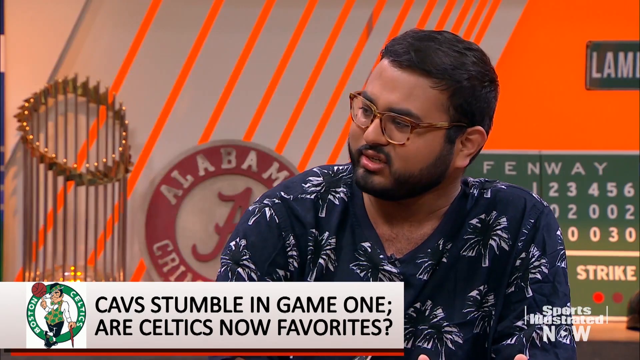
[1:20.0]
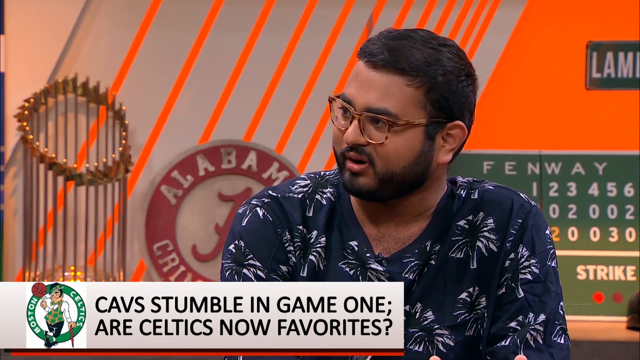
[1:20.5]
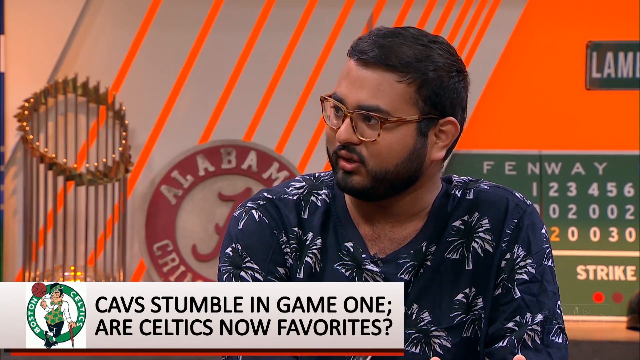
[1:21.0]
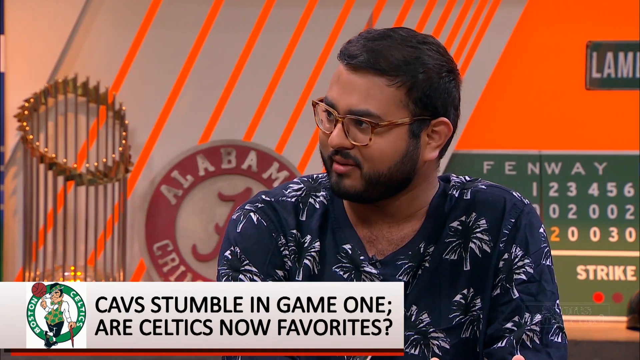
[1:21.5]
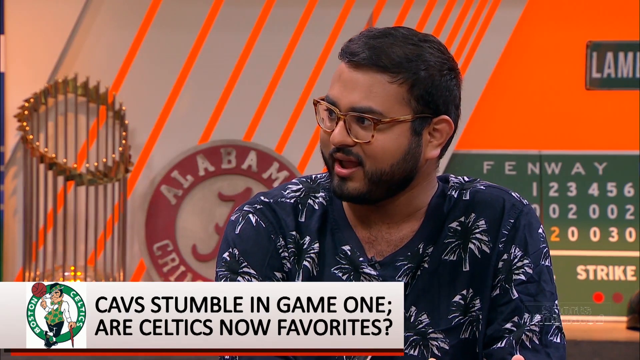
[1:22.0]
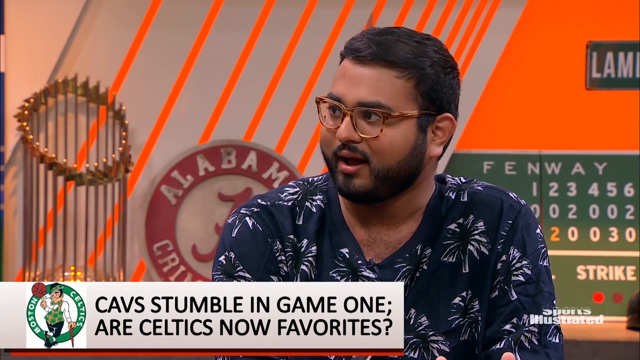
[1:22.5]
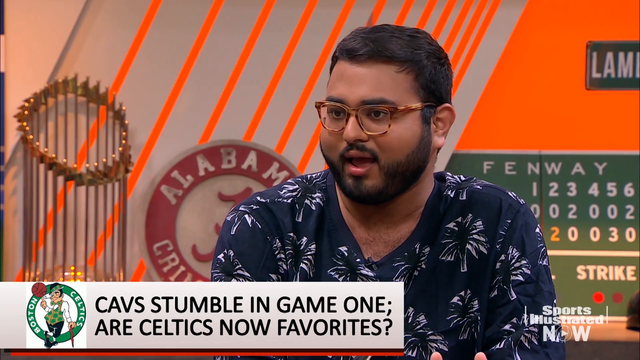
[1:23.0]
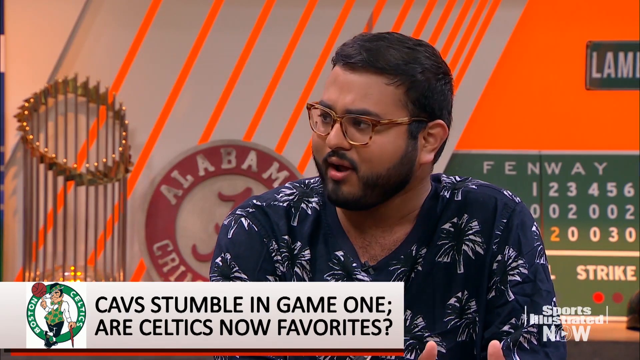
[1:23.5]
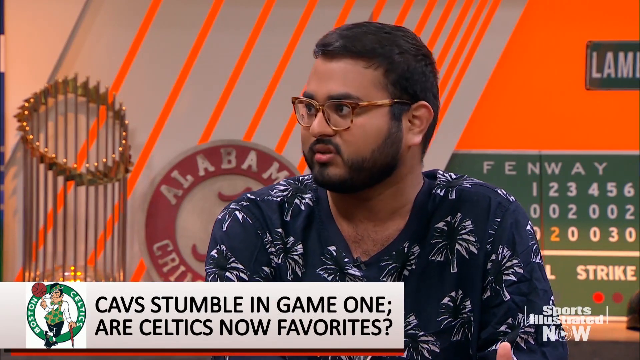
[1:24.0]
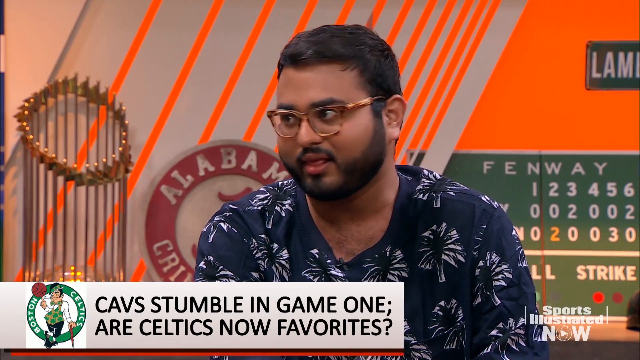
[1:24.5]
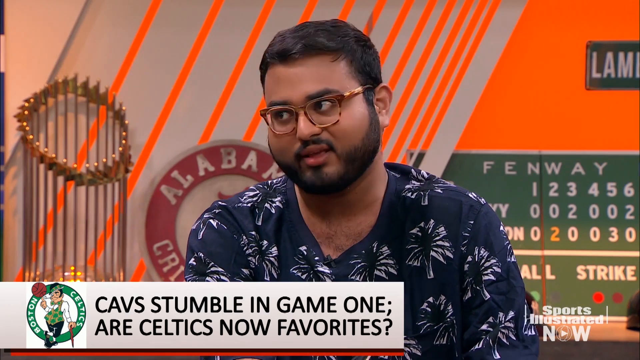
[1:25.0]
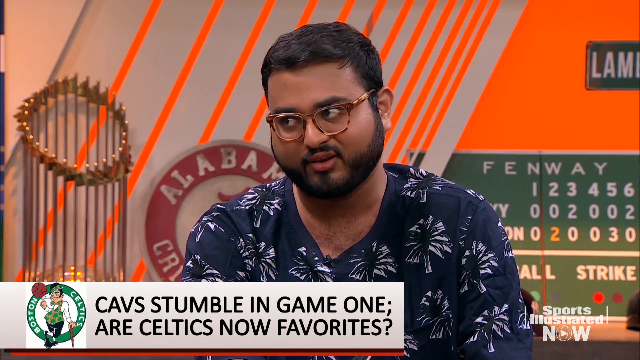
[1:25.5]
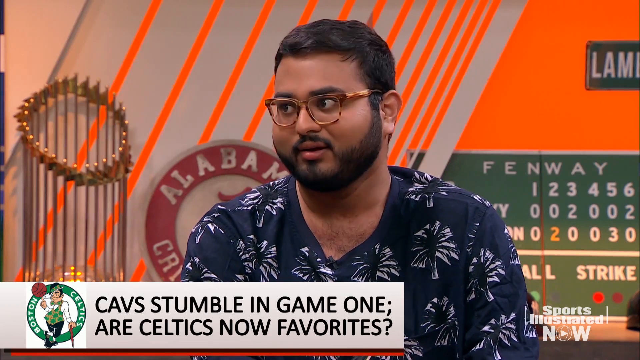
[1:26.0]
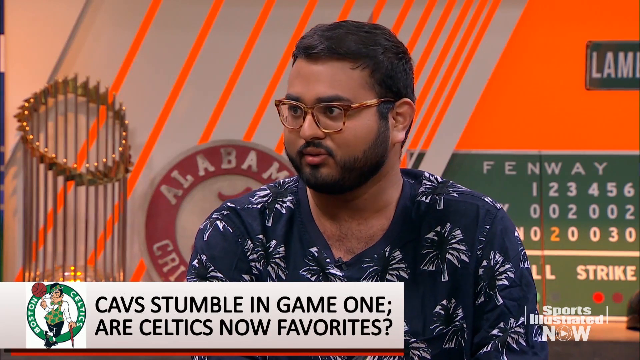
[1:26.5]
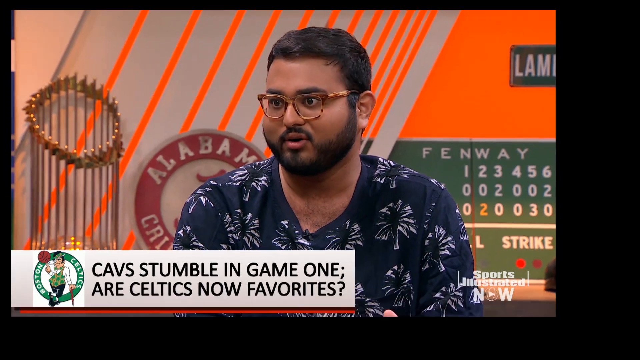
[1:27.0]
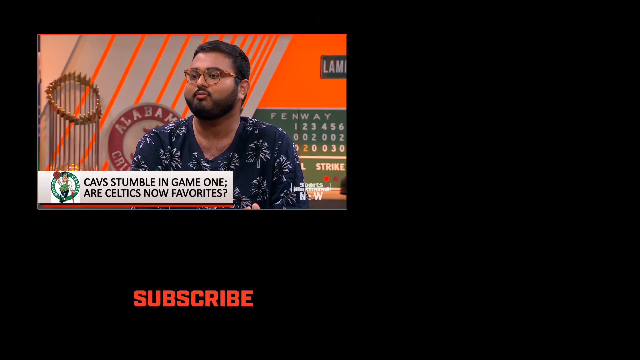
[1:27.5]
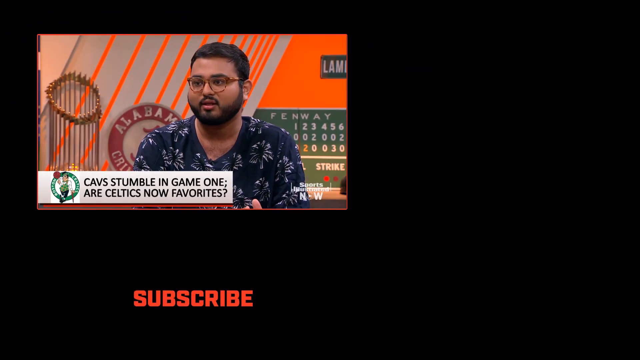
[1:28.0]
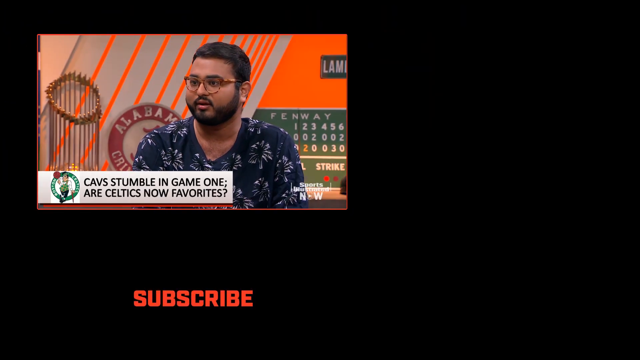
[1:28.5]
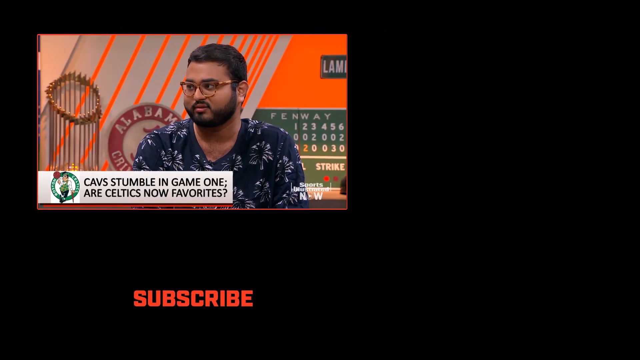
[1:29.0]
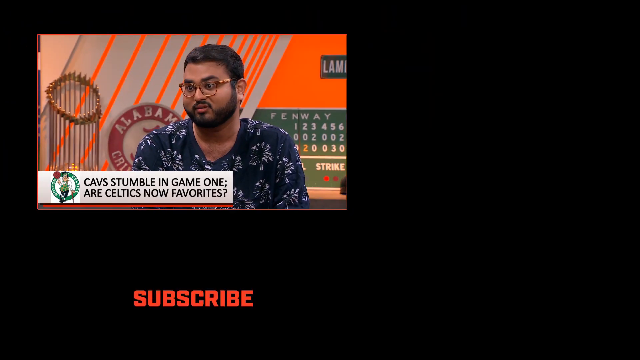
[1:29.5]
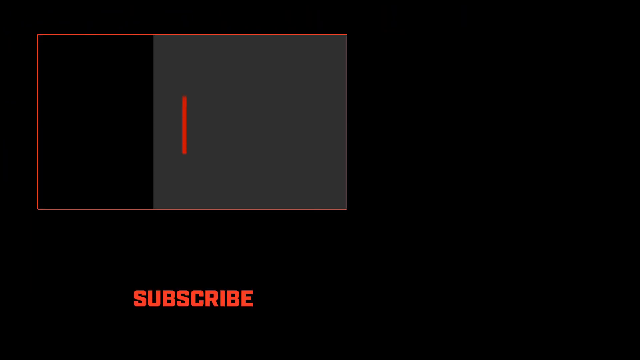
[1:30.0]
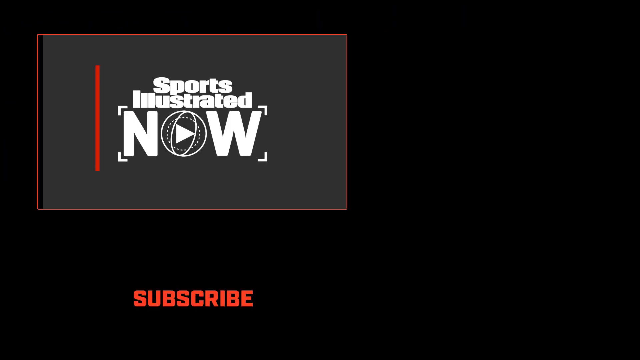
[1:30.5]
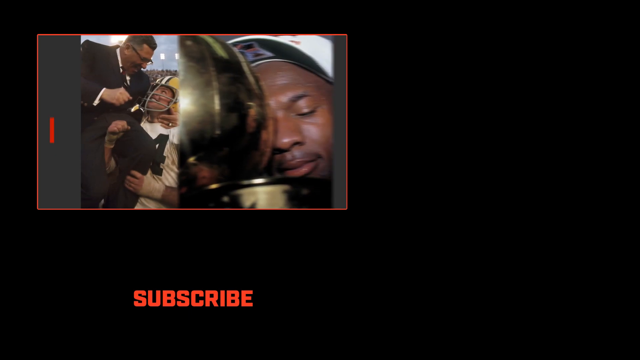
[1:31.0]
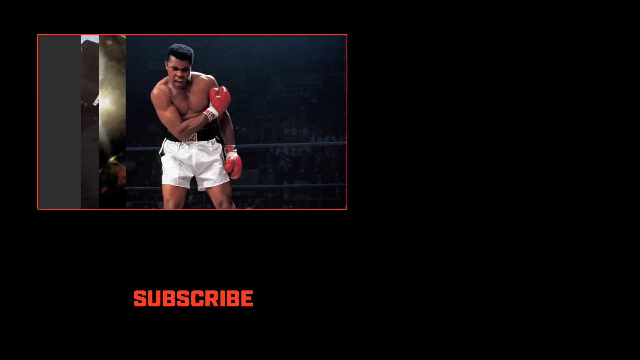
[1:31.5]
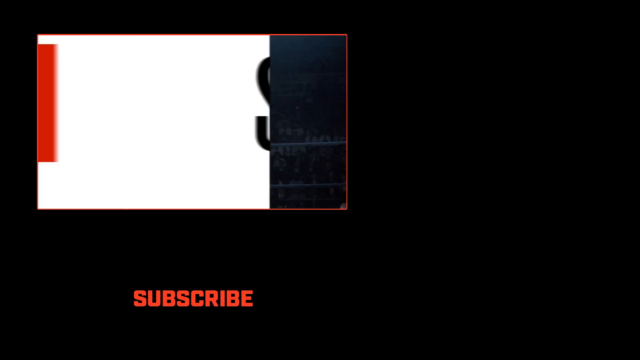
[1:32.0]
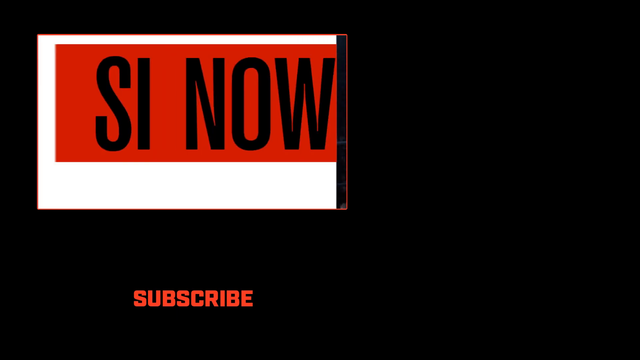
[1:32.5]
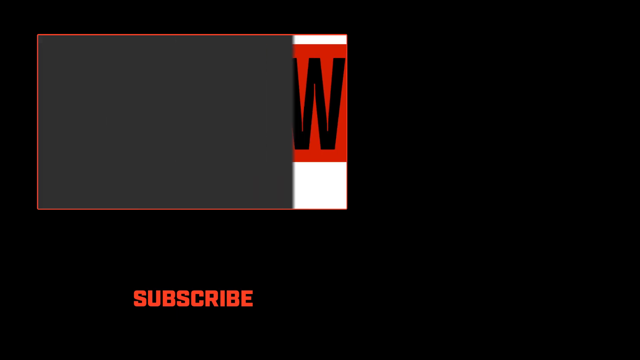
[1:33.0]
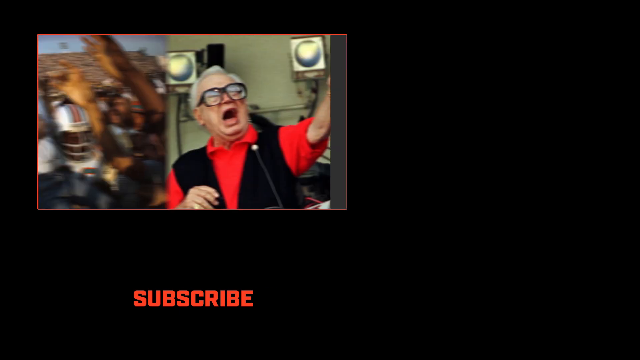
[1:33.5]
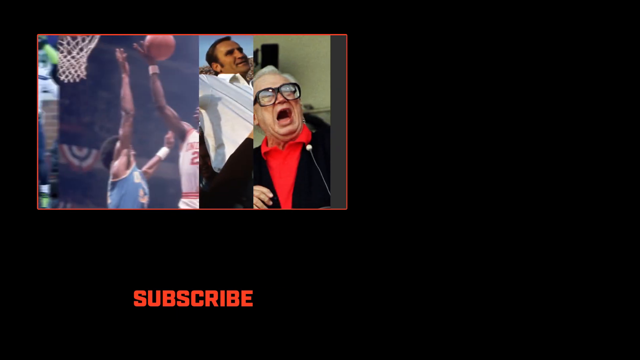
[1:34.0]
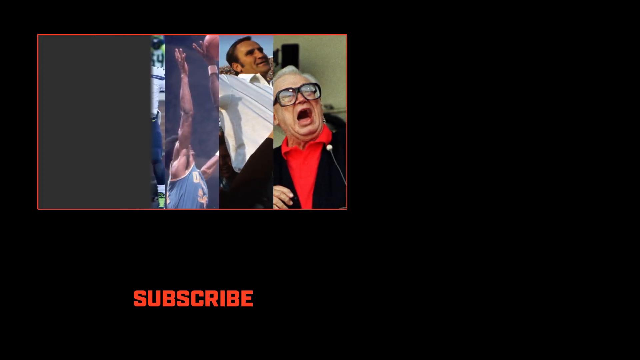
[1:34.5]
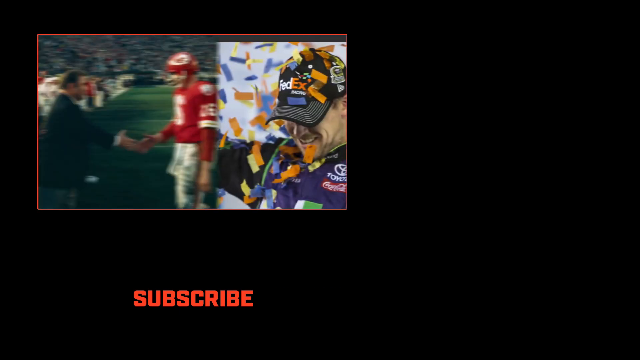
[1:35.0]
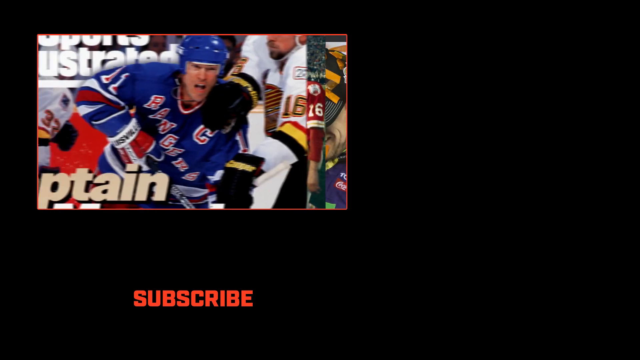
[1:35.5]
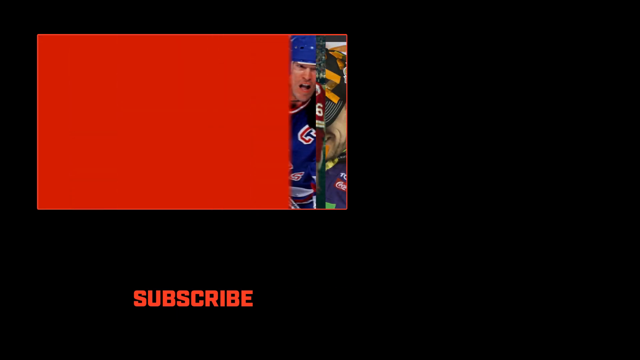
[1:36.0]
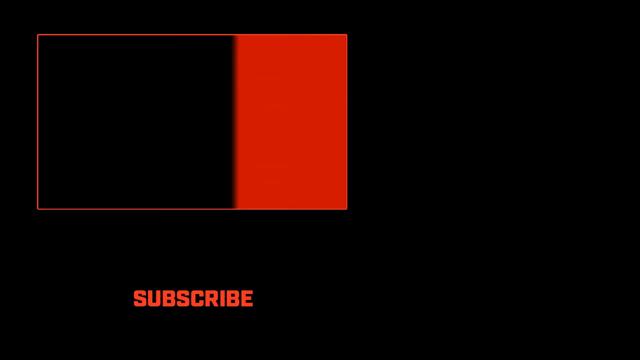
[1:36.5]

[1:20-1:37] A man in glasses is talking. The part of the video showing the men talking shrinks into the top left side of the screen, and a collage of pictures of sports teams in action appears with the word "subscribe," apparently asking viewers to subscribe to the Sports Illustrated now YouTube channel. The collage stays on screen with "subscribe," and then the scene fades to black.